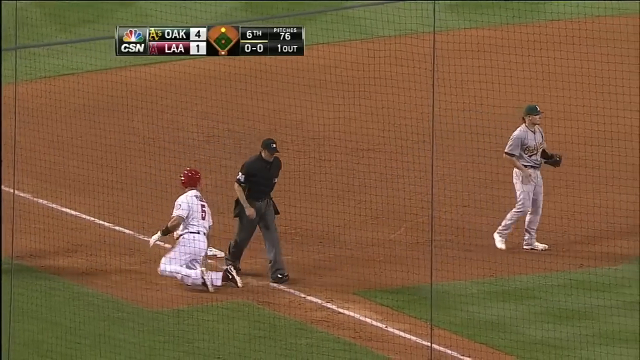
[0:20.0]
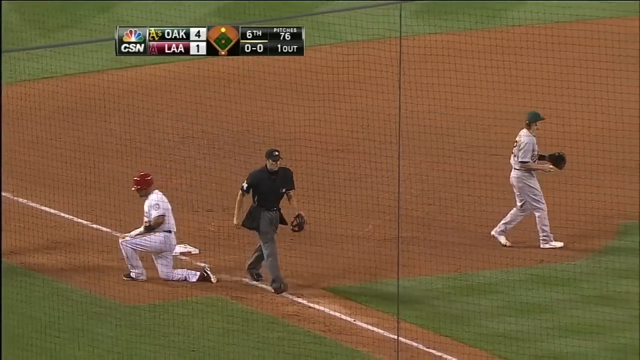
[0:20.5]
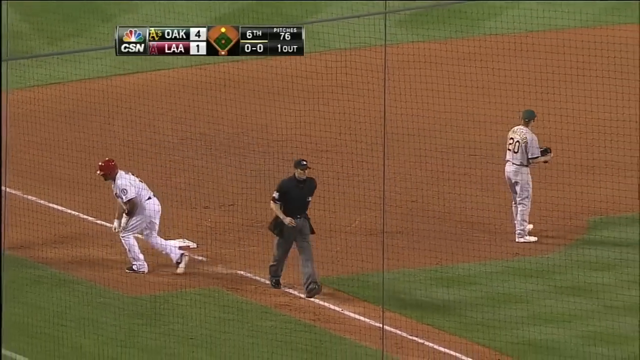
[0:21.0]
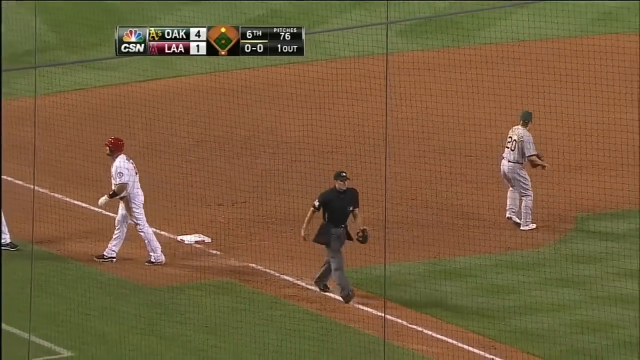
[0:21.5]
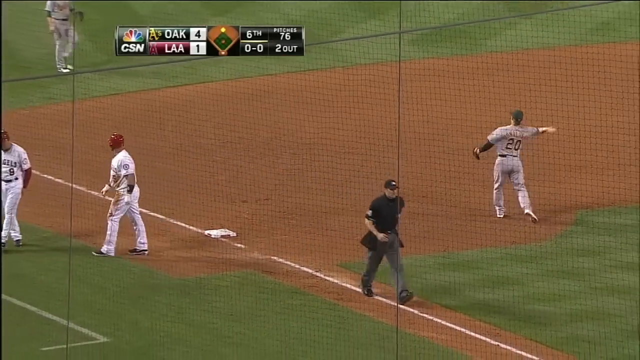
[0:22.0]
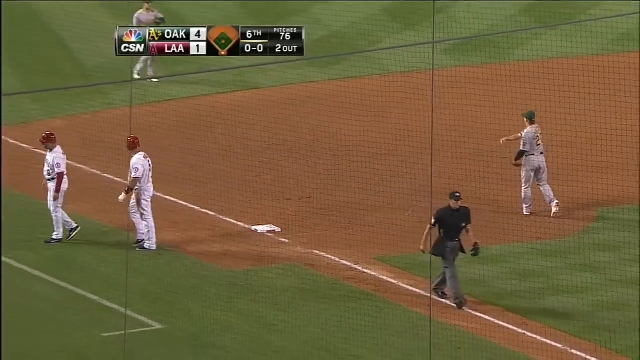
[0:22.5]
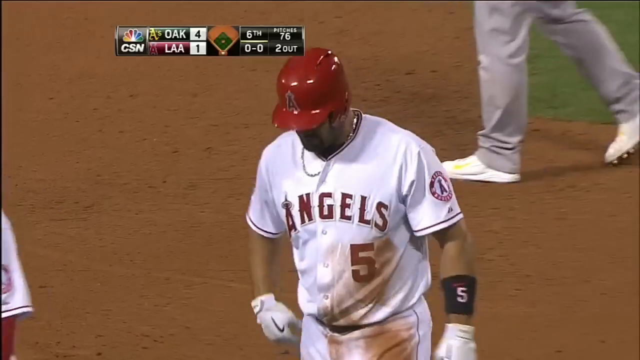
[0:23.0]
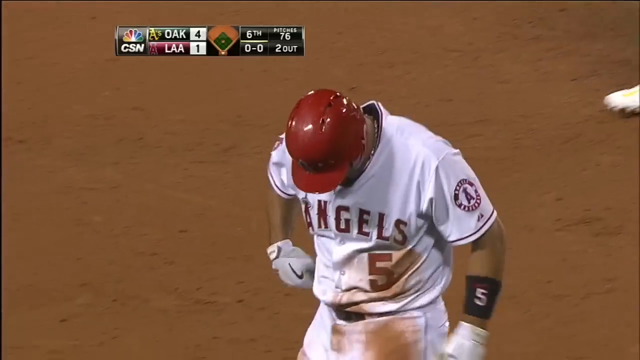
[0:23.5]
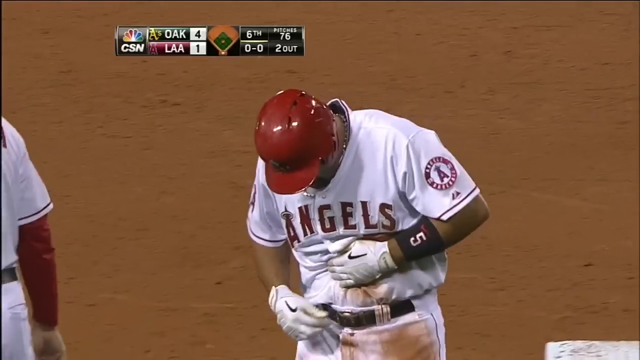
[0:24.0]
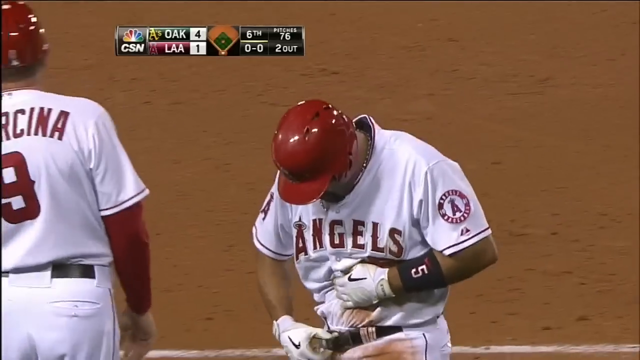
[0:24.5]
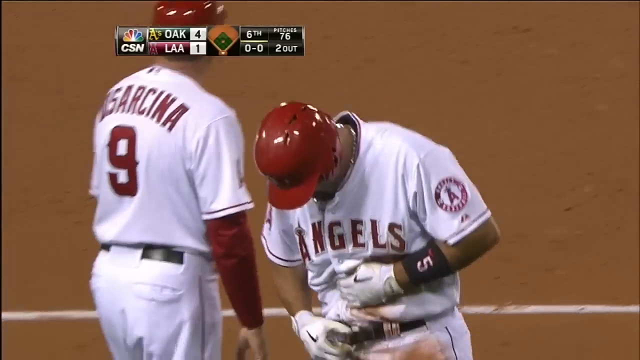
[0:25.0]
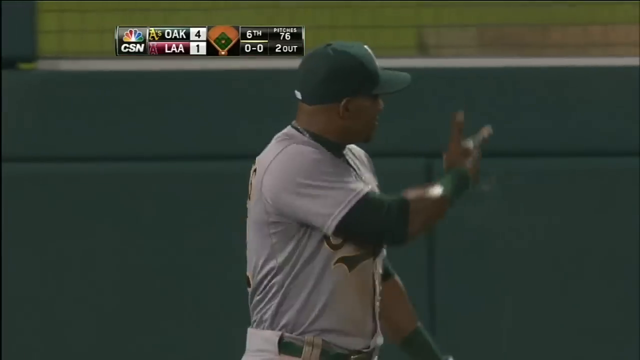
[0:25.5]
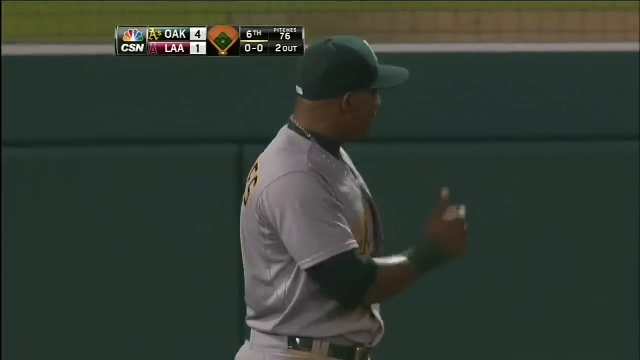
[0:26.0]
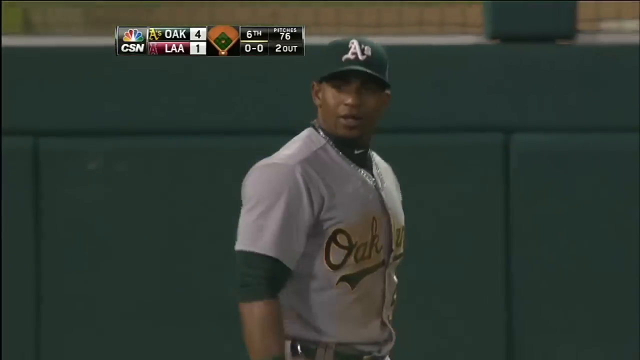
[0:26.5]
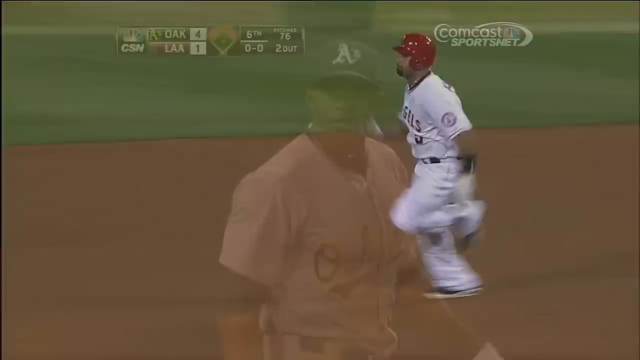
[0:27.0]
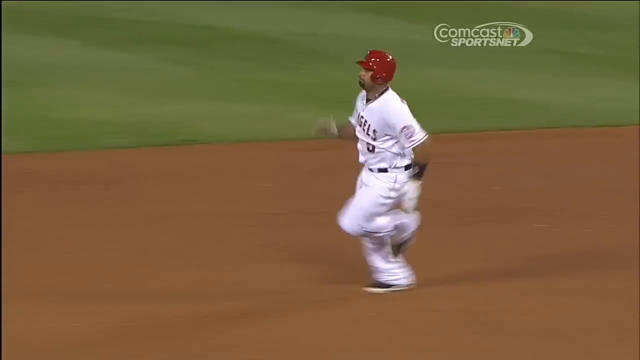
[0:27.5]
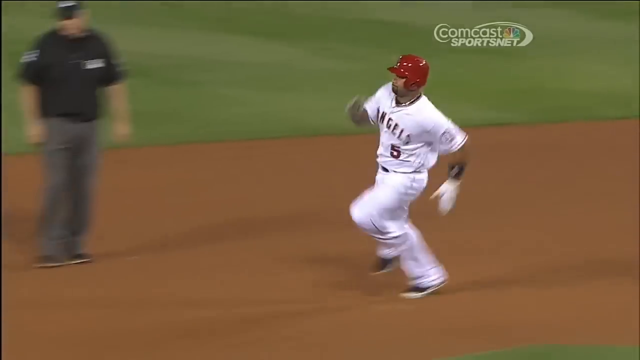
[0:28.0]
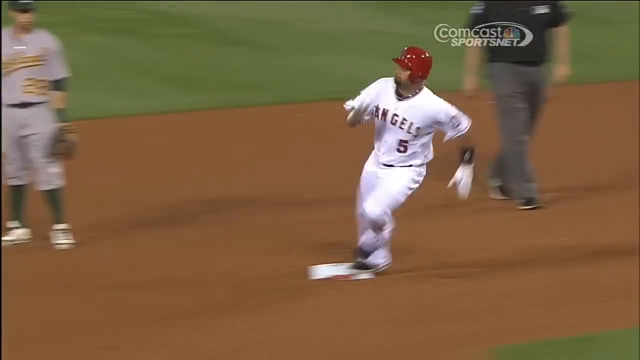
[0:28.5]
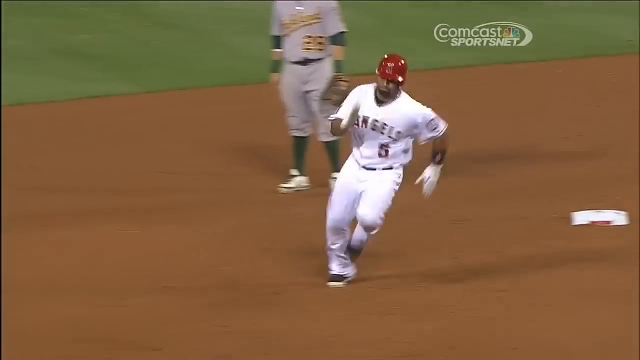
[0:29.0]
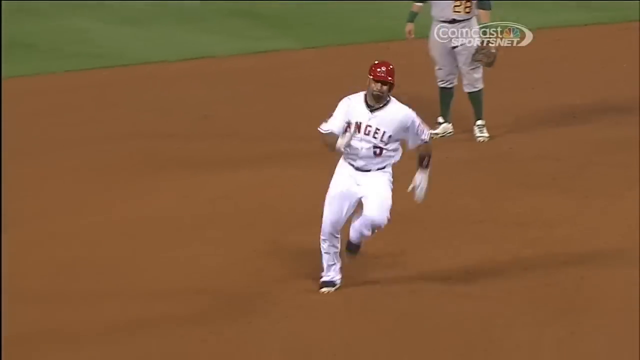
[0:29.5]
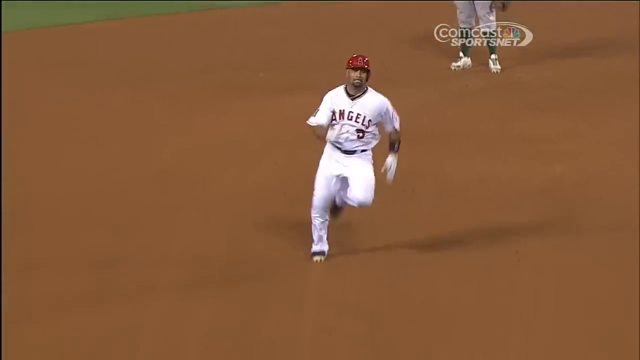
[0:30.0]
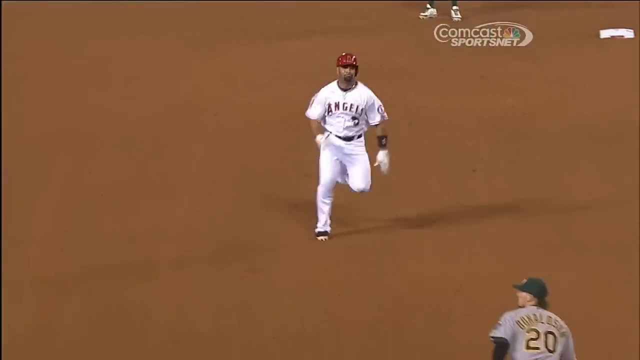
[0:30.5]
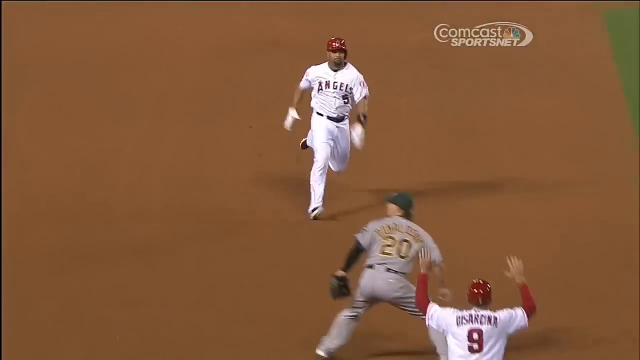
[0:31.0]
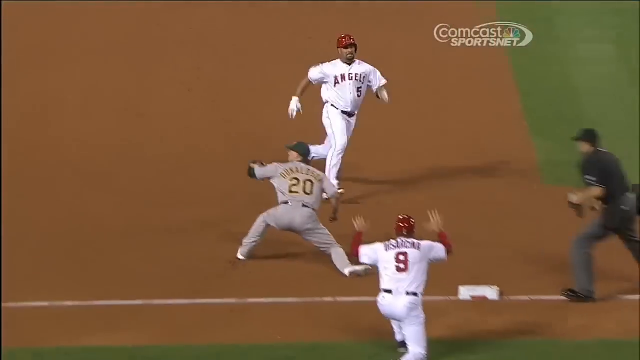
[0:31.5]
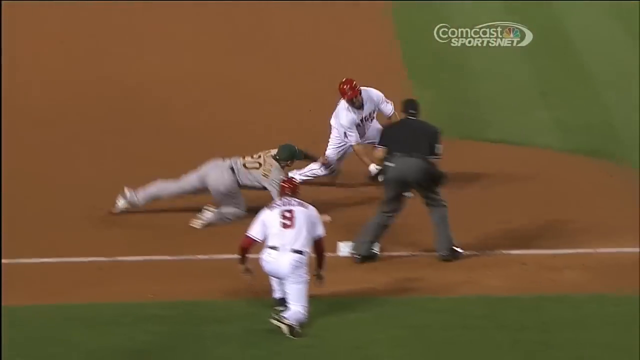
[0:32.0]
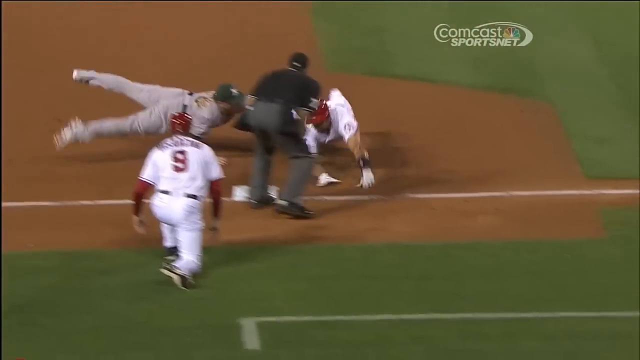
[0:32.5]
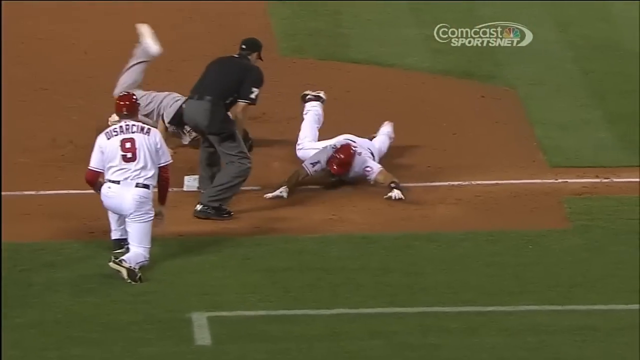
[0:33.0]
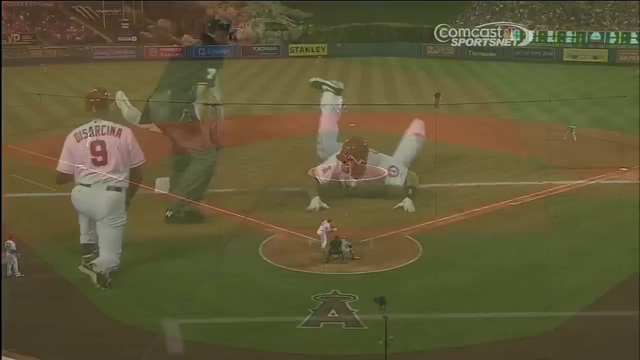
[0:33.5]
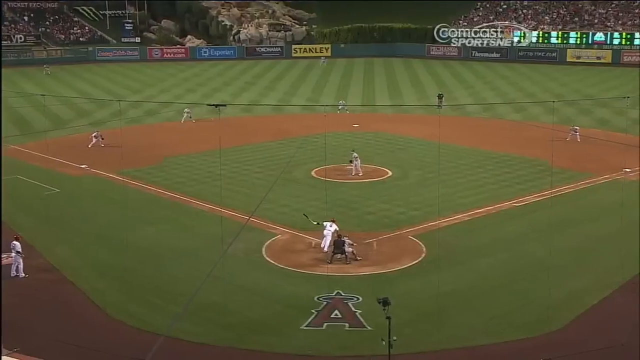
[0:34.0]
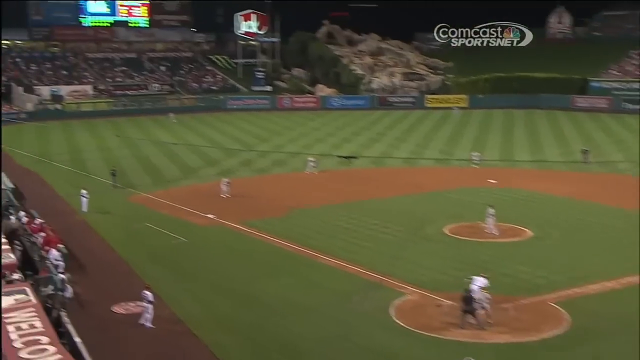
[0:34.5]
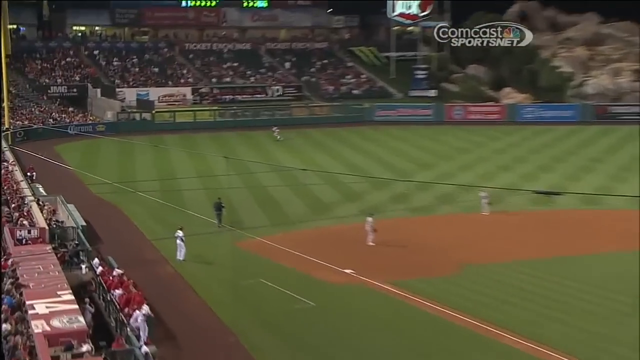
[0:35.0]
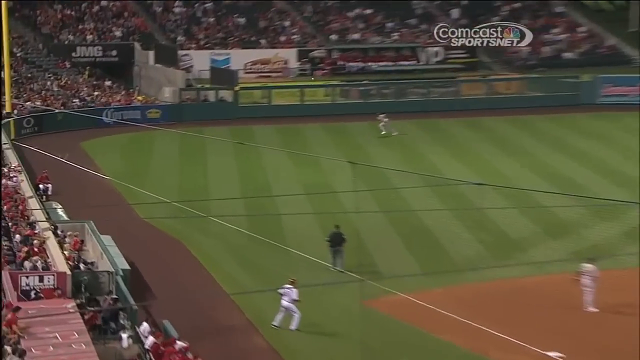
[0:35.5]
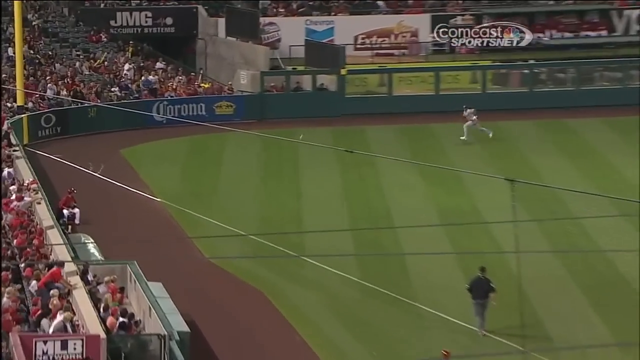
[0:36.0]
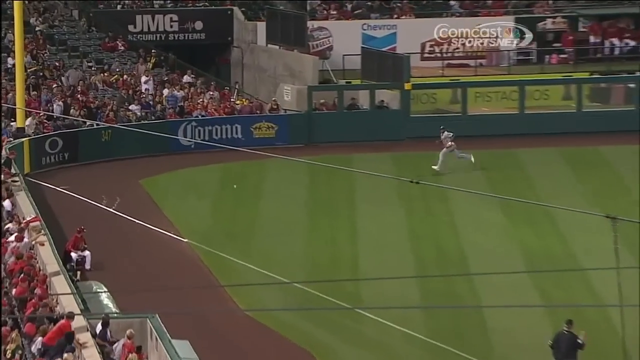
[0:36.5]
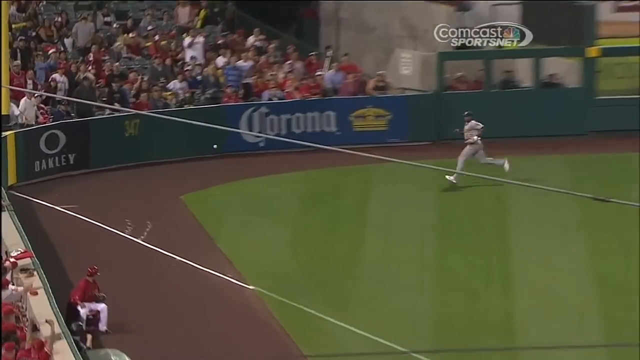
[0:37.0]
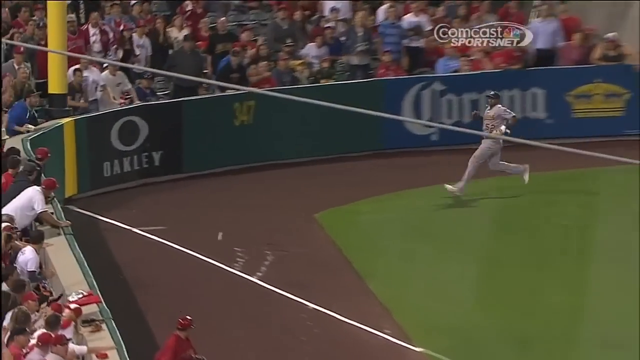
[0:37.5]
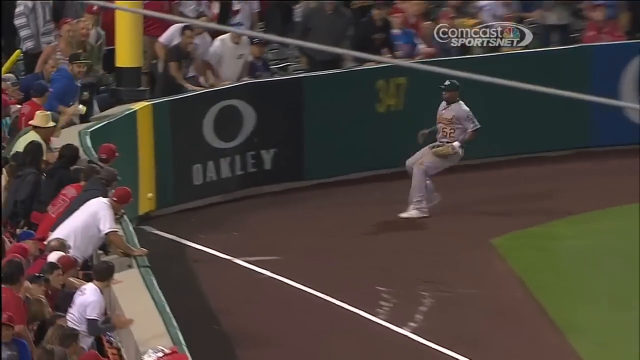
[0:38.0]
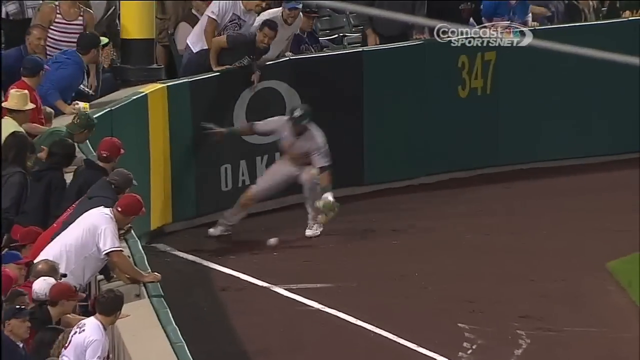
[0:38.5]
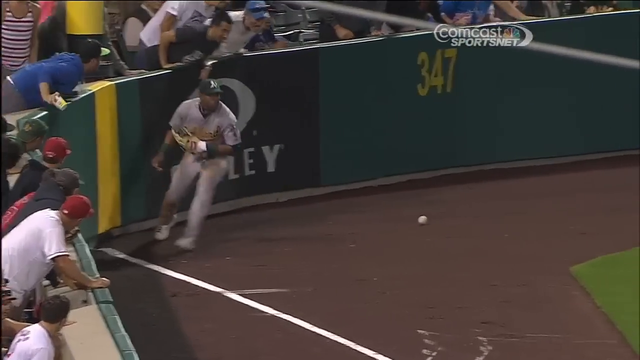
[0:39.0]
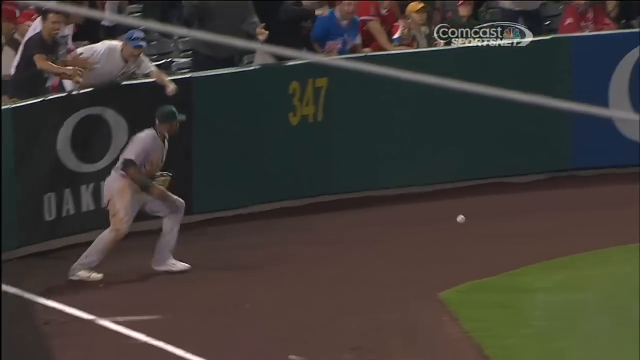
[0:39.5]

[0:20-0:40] More footage from the Oakland and Los Angeles game follows. A wide-angle shot, pulled back from the crowd view, shows an umpire walking down the baseline toward home plate. In the background, two baseball players are fielding balls as they practice, either between innings or before a game. The scene switches to a close-up of an Angels player walking toward the camera across the infield. He wears a white jersey that says "Angels" in red across the center, with a red number five on the left abdominal area. He has a white glove on his right hand and a black arm warmer on his left with a white number five on it, and he wears a red batter's helmet. As he walks toward the camera, he adjusts his belt around his waist up and down. His white gloves have black Nike swooshes, and the sleeves of his uniform carry the circular red Angels logo.